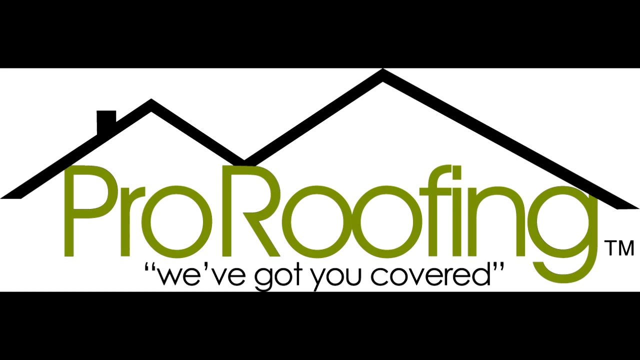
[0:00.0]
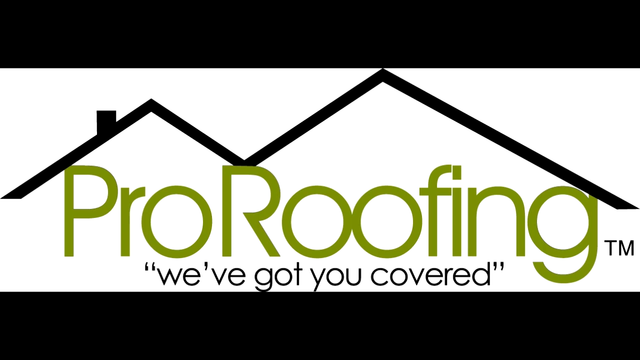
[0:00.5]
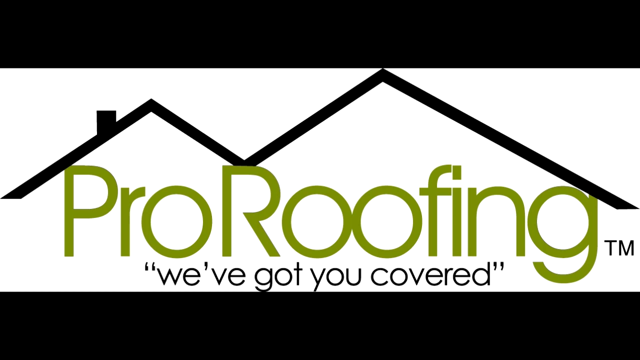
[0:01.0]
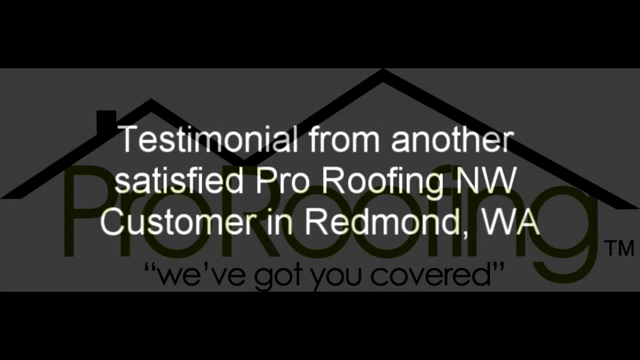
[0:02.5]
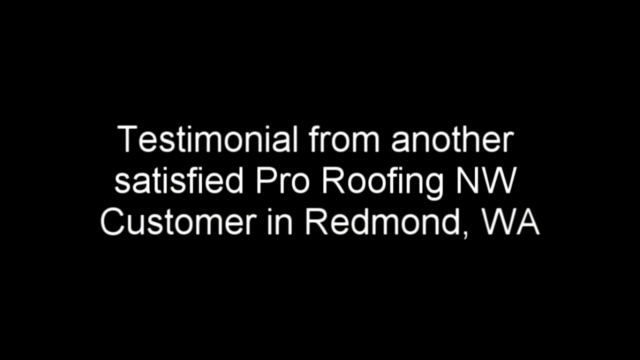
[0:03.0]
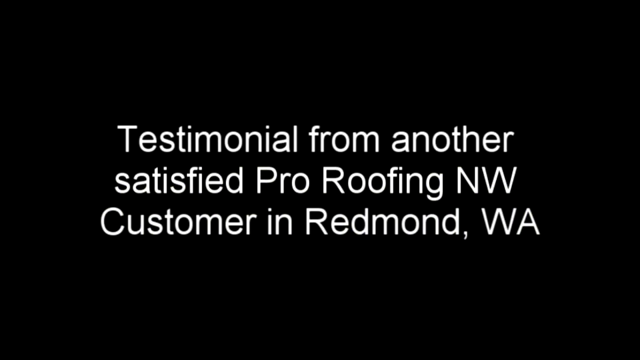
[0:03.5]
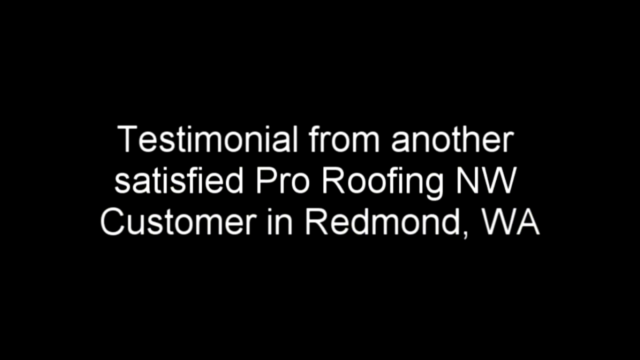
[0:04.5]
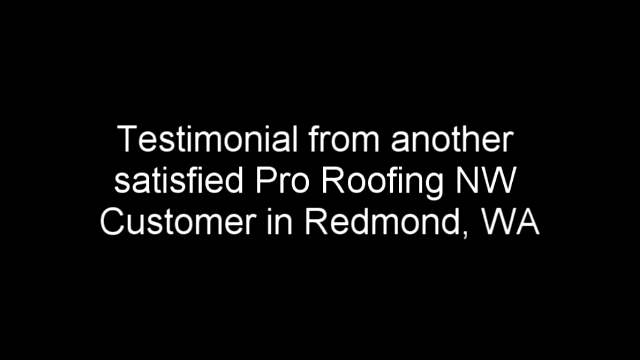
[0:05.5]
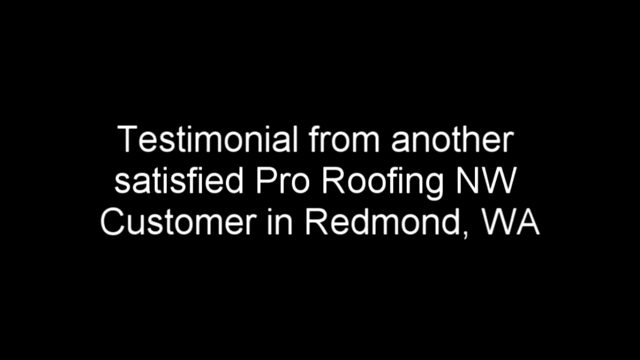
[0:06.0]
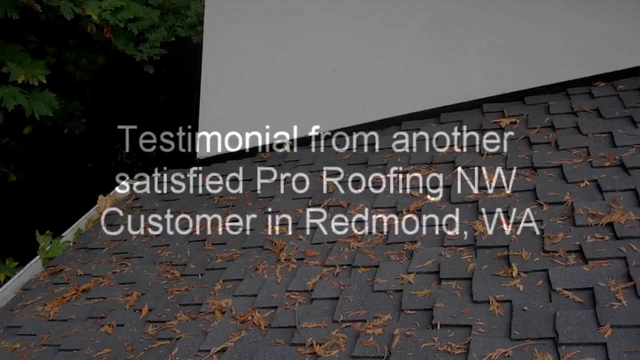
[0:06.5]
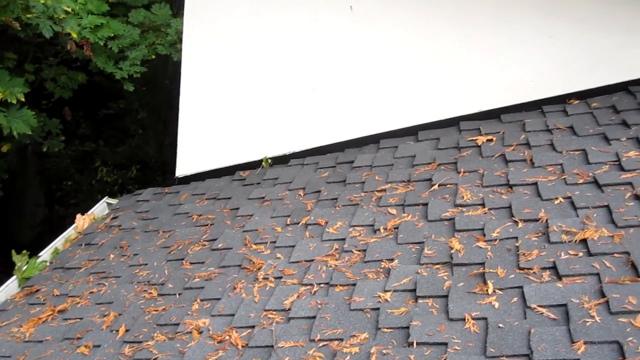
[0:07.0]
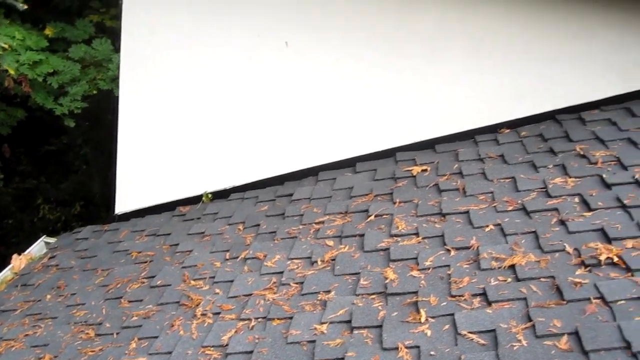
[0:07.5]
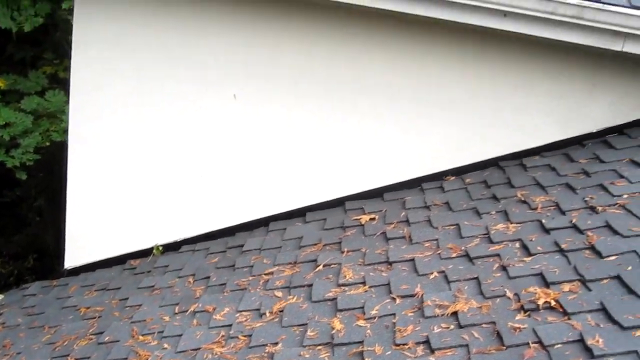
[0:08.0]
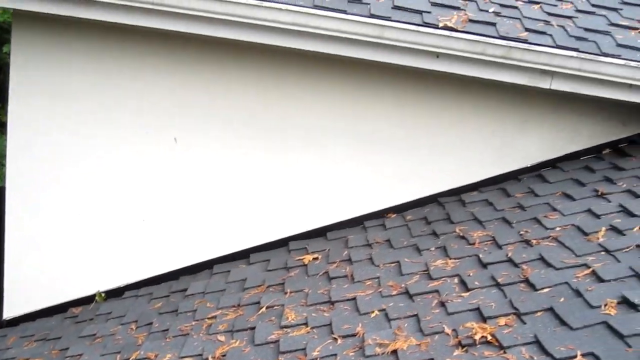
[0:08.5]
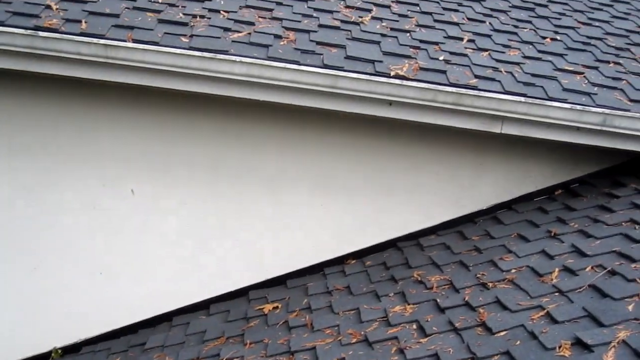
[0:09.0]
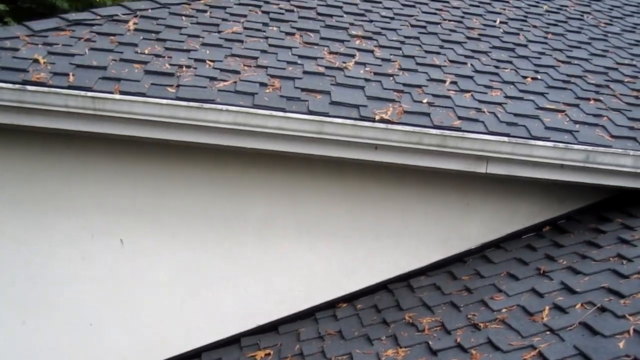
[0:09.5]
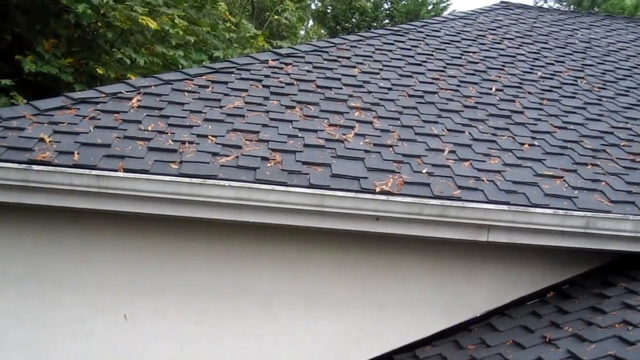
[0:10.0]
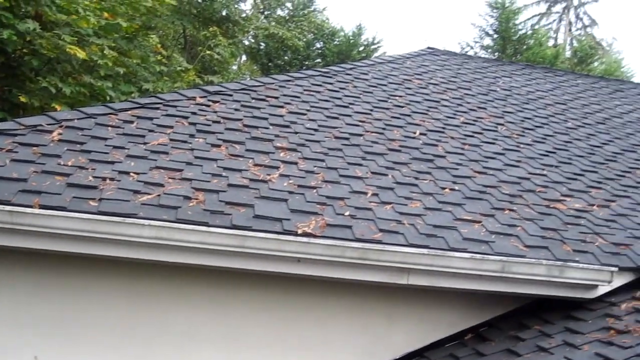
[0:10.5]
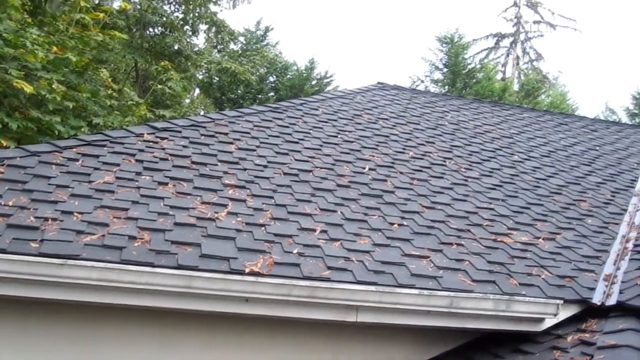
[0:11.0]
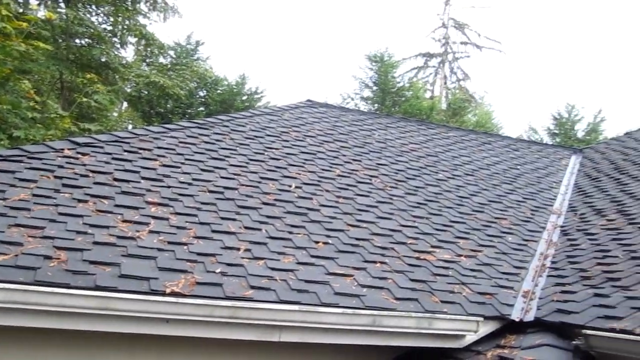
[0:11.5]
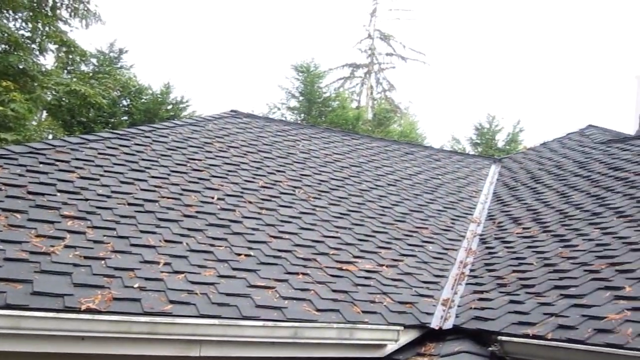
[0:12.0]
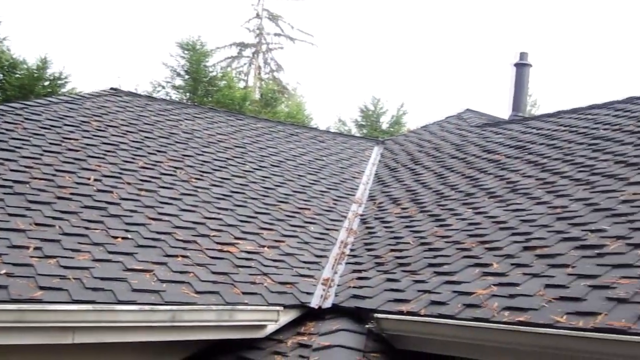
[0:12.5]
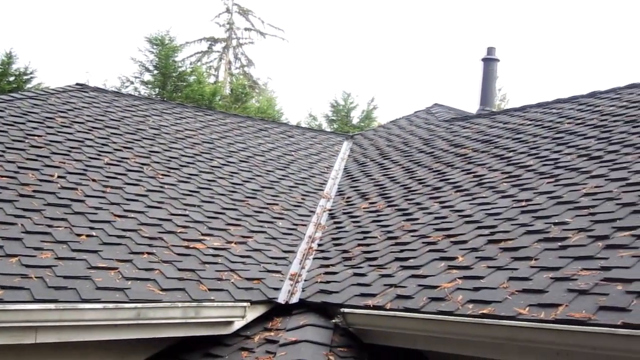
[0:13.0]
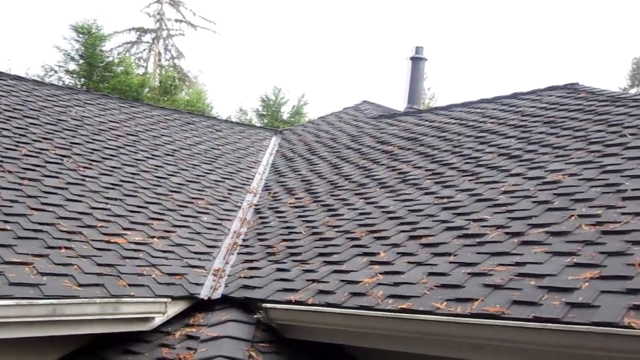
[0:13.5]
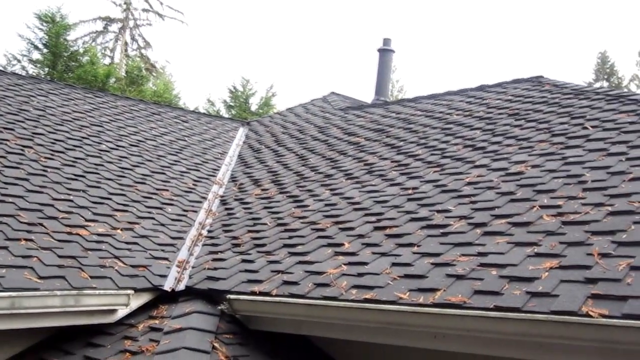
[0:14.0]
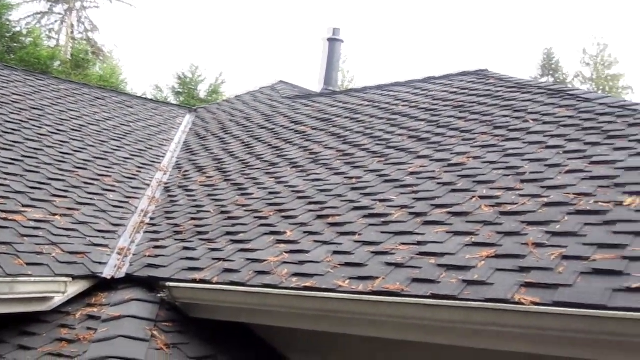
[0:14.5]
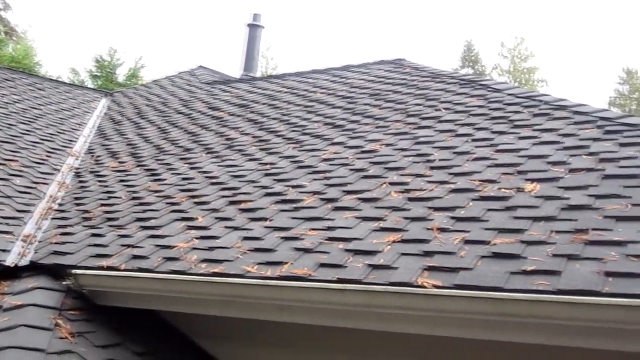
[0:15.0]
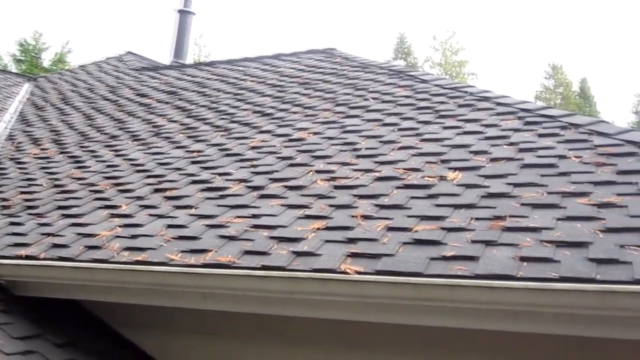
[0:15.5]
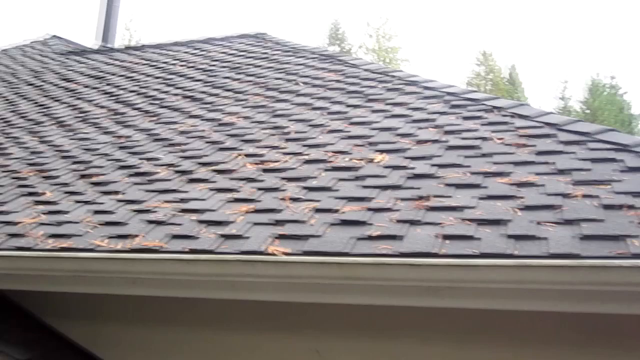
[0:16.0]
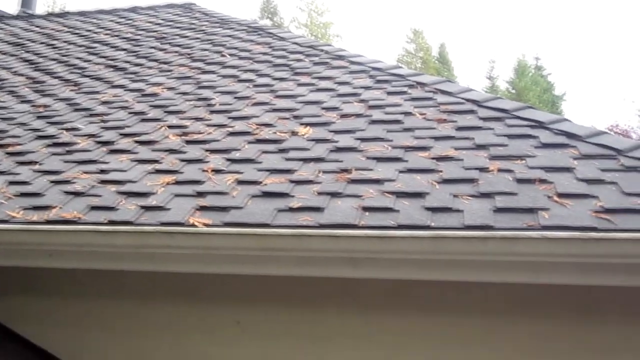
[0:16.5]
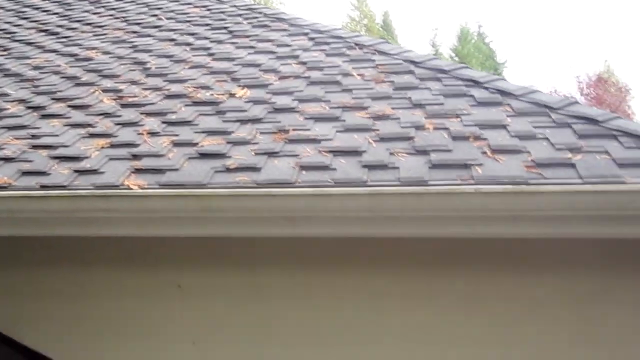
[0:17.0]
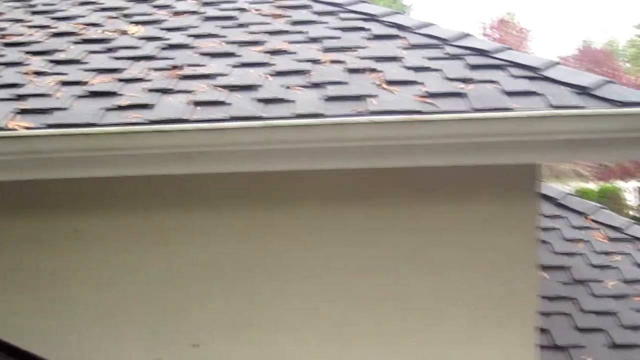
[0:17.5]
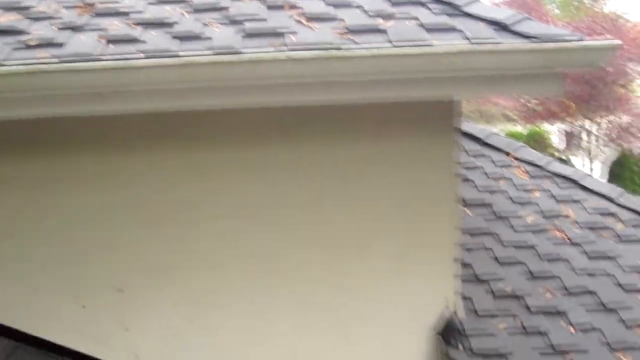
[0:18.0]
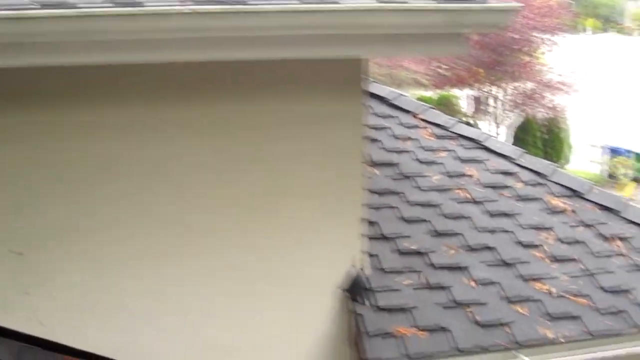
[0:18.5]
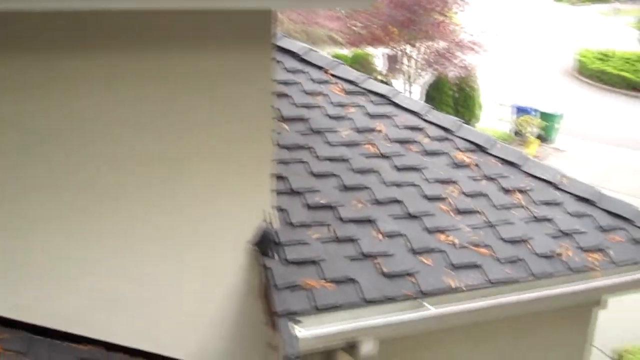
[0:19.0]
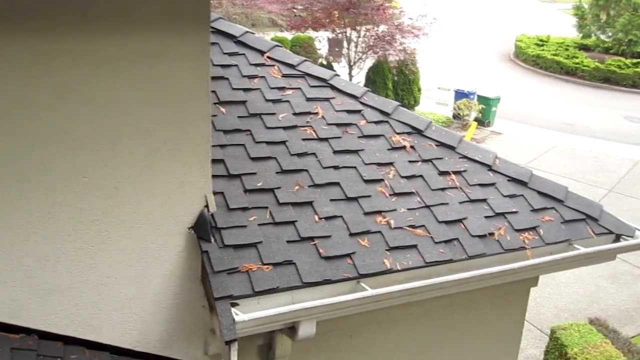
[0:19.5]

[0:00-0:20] The video opens with a logo that reads "Pro Roofing" and "we've got you covered" on a white backdrop, with the business name in green lettering and the motto "we've got you covered" in black lettering. Two drawn roofs also appear. Another piece of text follows: "testimonial from another satisfied Pro Roofing Northwest customer in Redmond, Washington." The video then shows the top of a newly done house roof, with what look to be black shingles, all interconnected. Gutters are on the roof, along with some fallen leaves. The walls of the house look to be a beige-white color, and the gutters are white painted metal. The roof tiles all look to be very high quality, fitting together in a very uniform fashion, and the work appears to have just been completed.